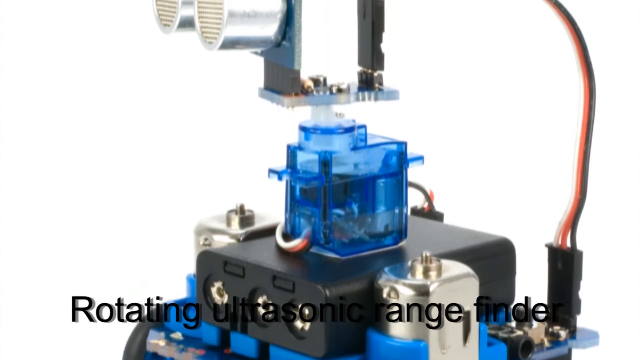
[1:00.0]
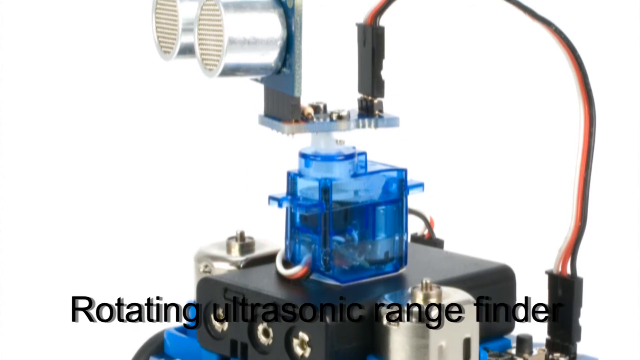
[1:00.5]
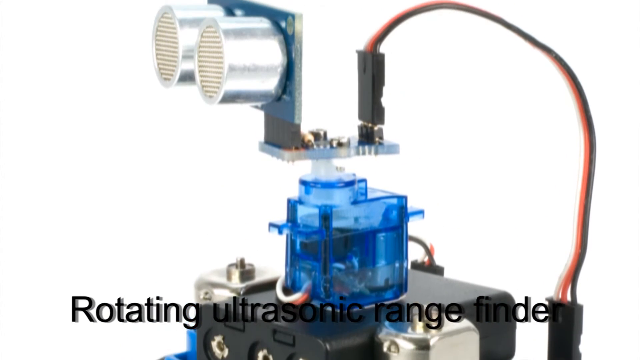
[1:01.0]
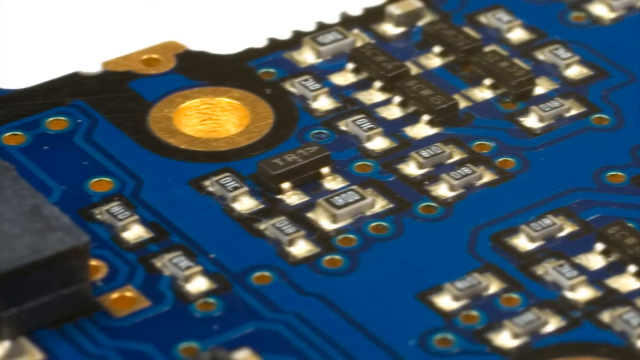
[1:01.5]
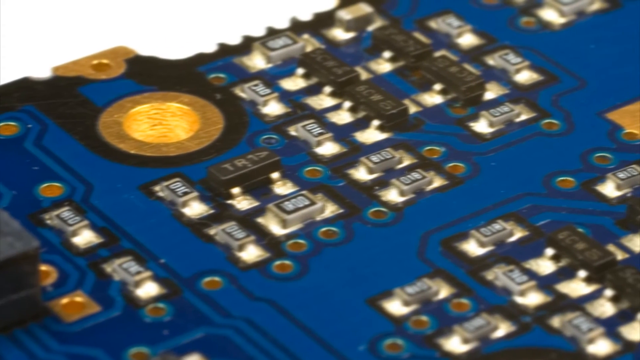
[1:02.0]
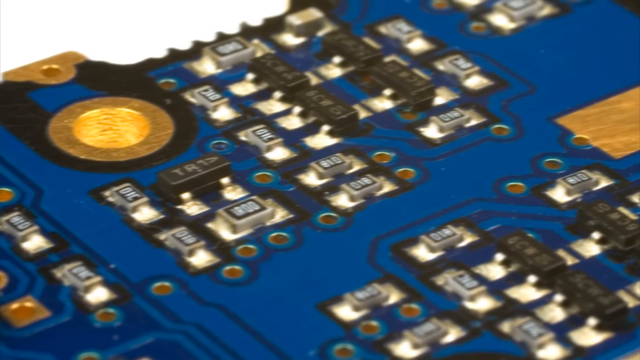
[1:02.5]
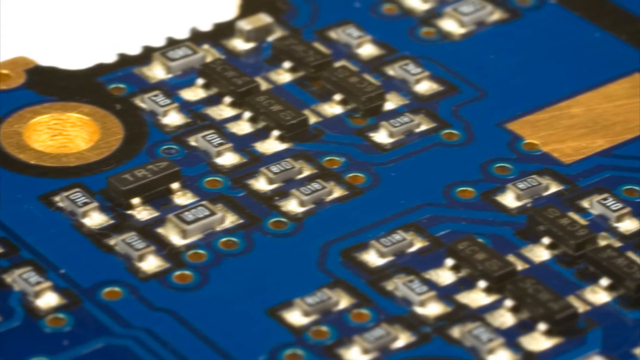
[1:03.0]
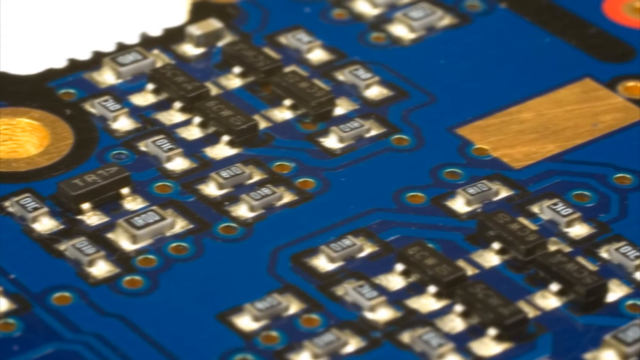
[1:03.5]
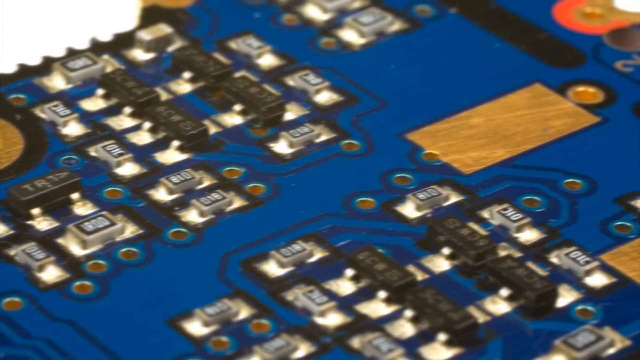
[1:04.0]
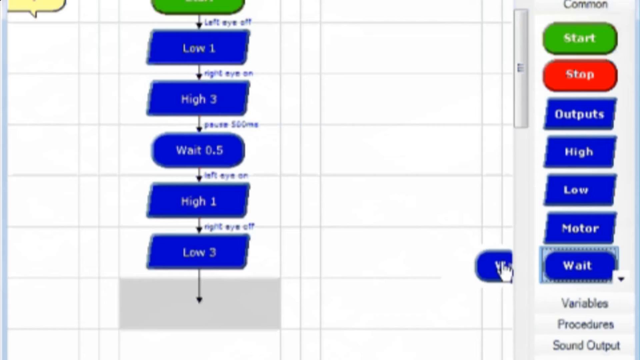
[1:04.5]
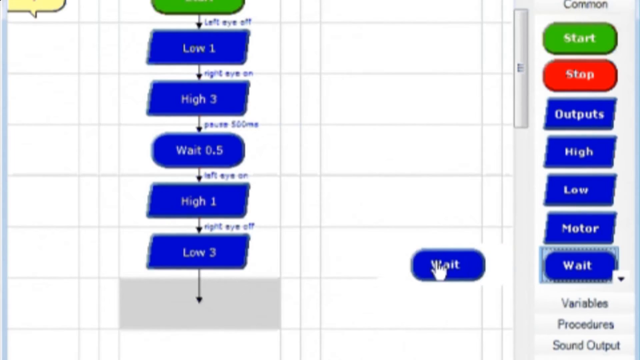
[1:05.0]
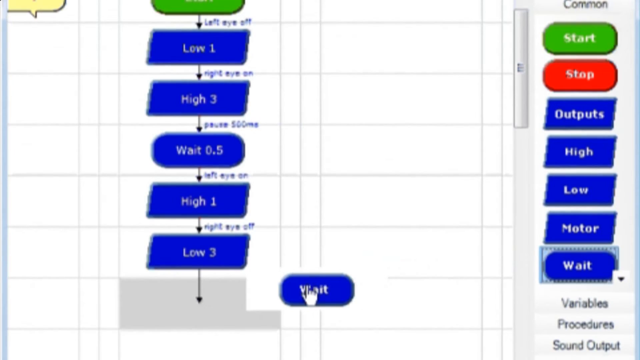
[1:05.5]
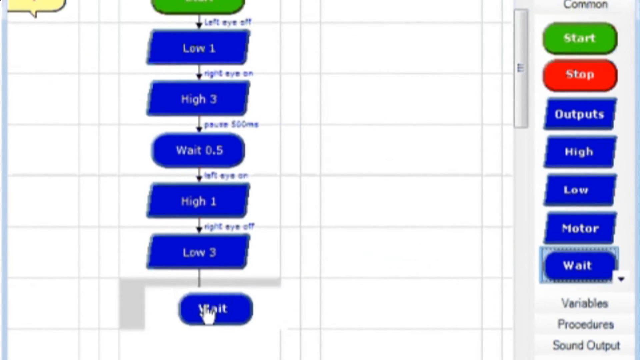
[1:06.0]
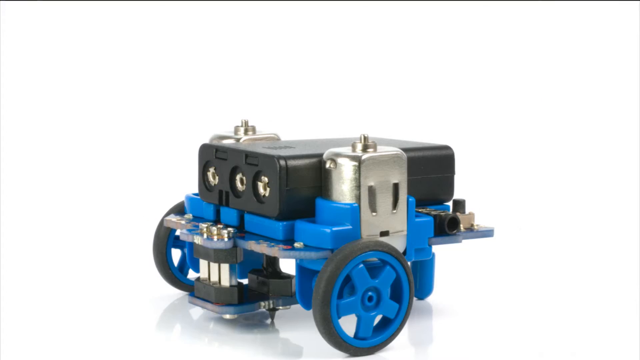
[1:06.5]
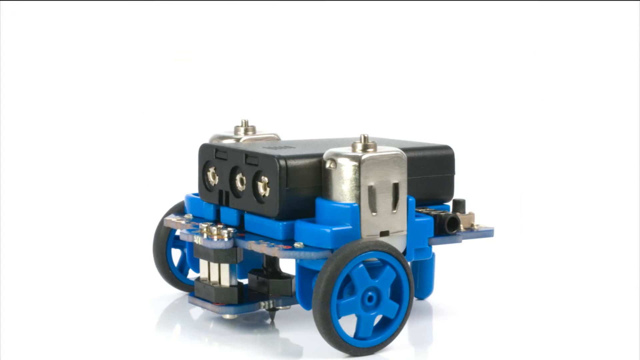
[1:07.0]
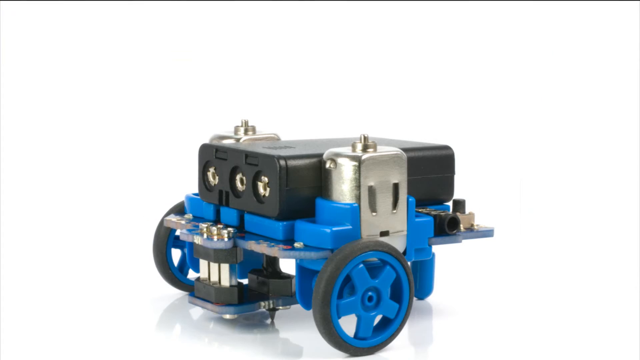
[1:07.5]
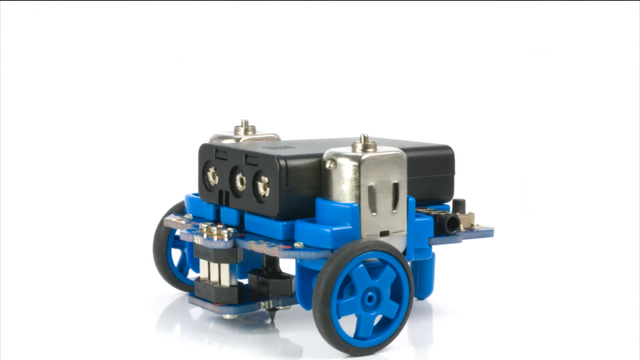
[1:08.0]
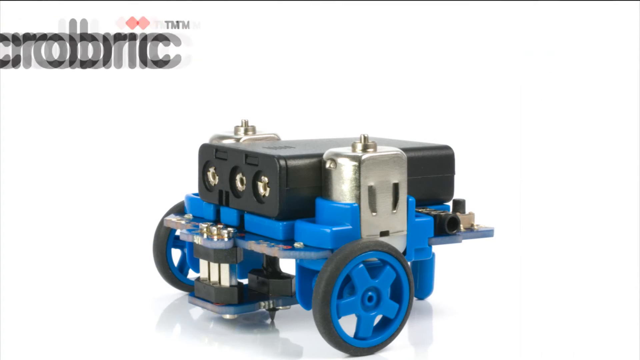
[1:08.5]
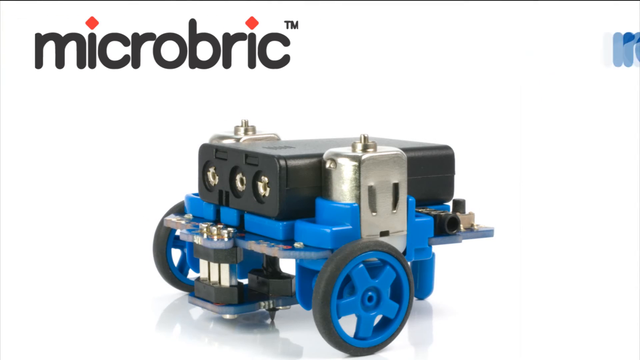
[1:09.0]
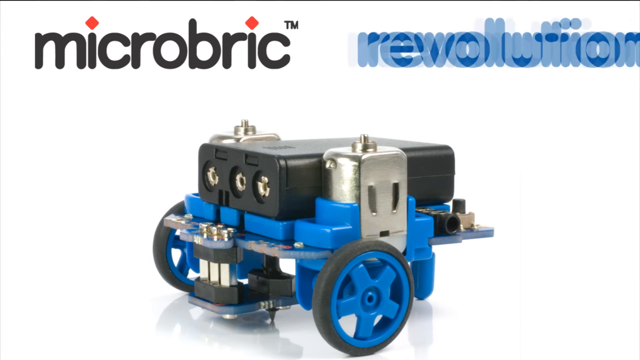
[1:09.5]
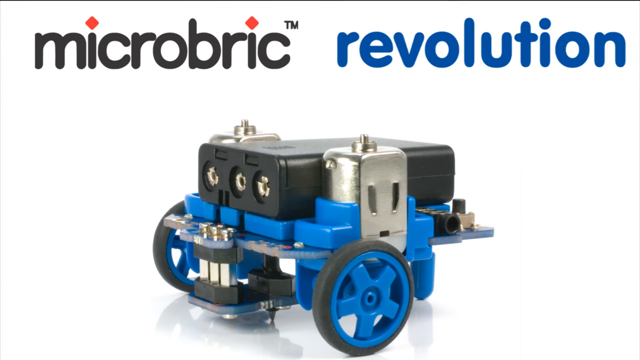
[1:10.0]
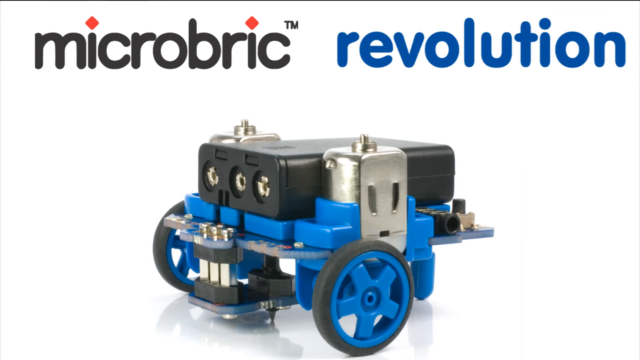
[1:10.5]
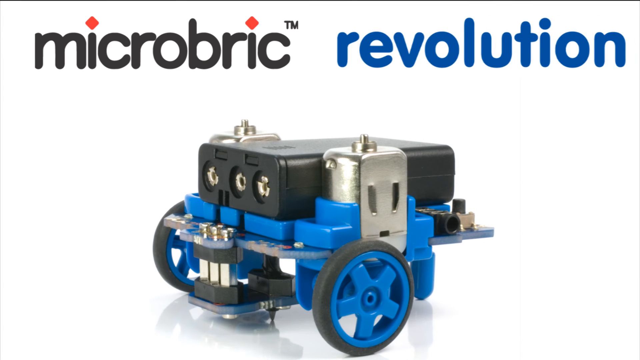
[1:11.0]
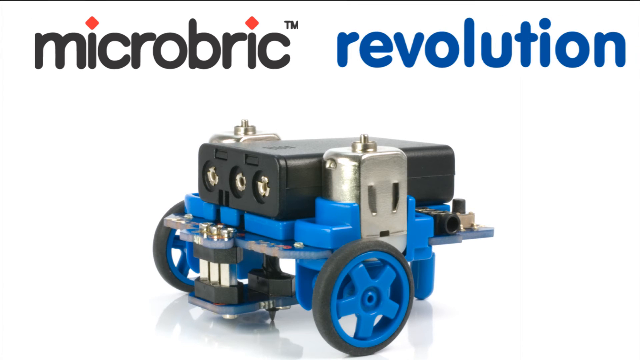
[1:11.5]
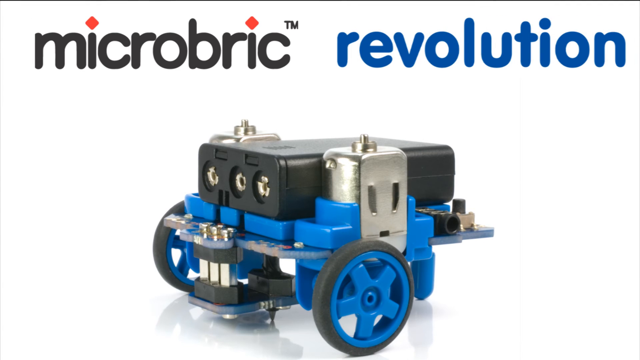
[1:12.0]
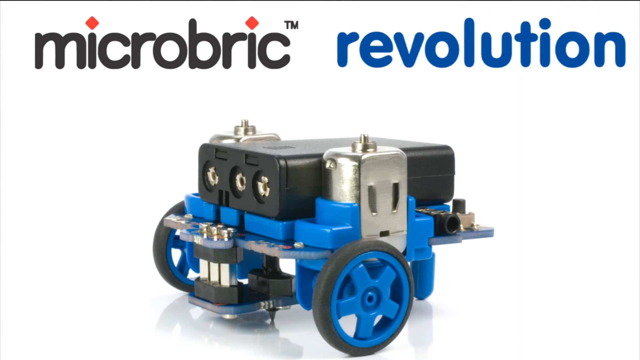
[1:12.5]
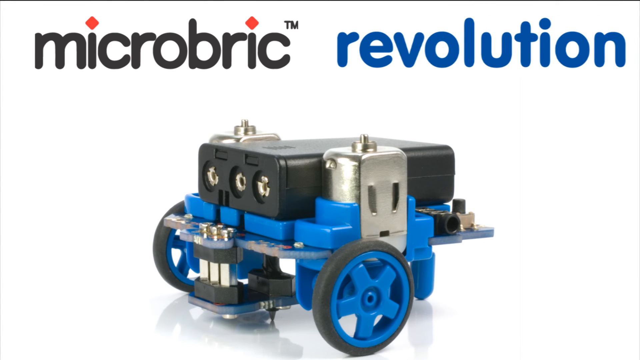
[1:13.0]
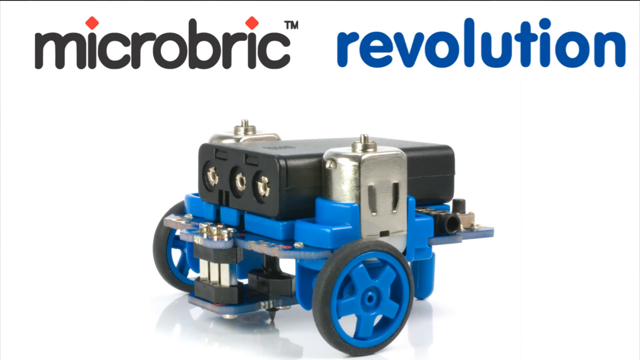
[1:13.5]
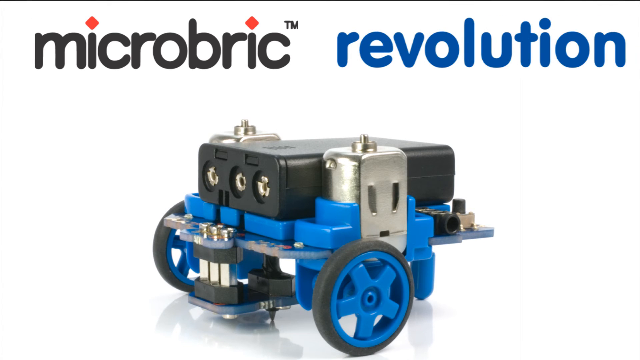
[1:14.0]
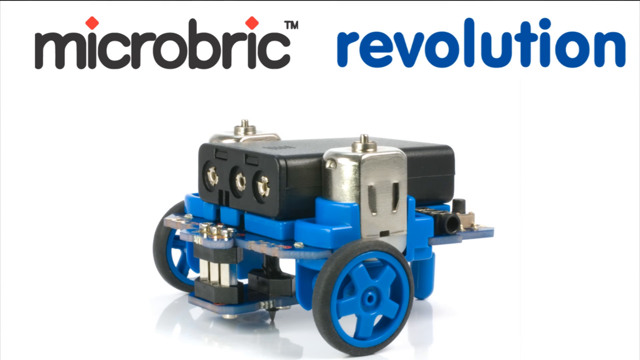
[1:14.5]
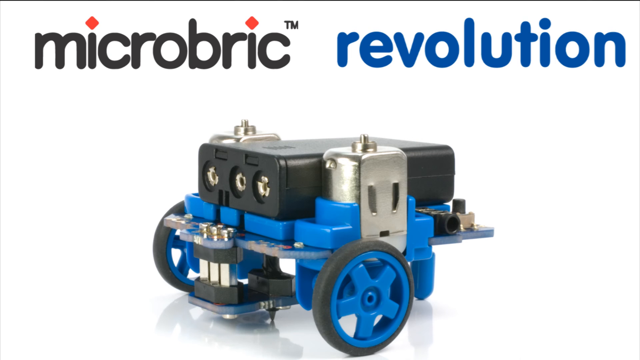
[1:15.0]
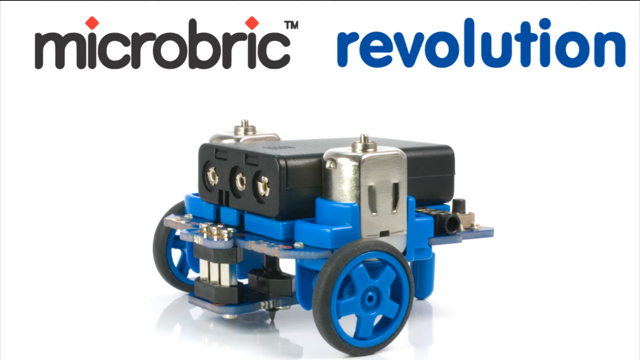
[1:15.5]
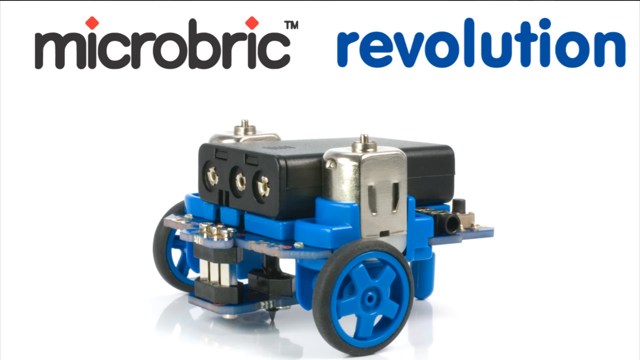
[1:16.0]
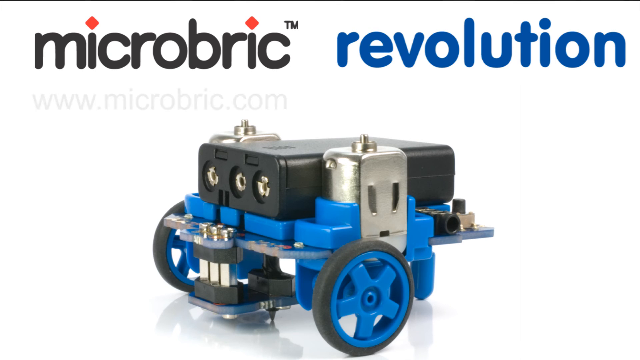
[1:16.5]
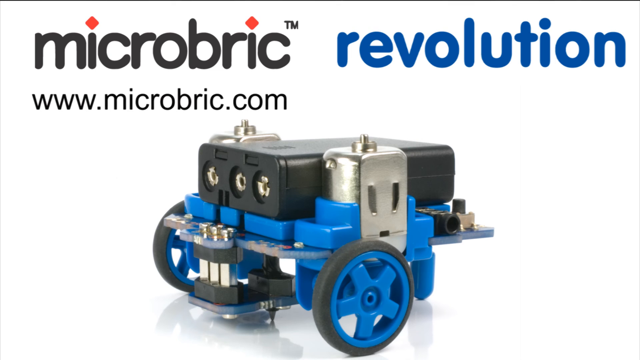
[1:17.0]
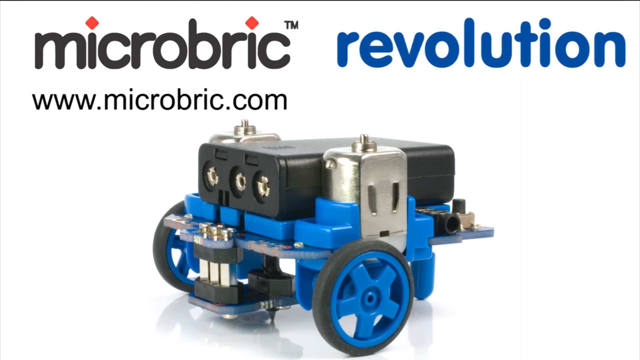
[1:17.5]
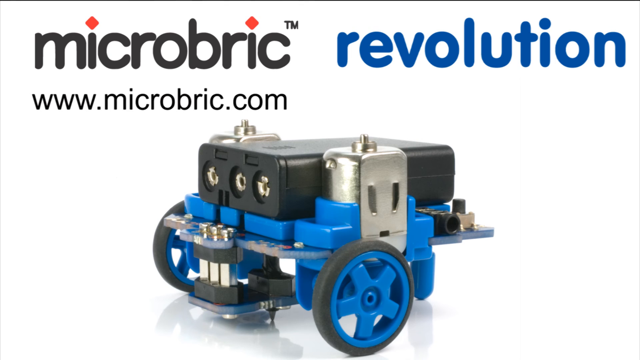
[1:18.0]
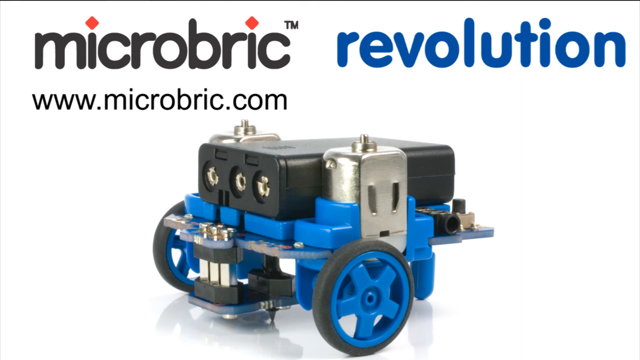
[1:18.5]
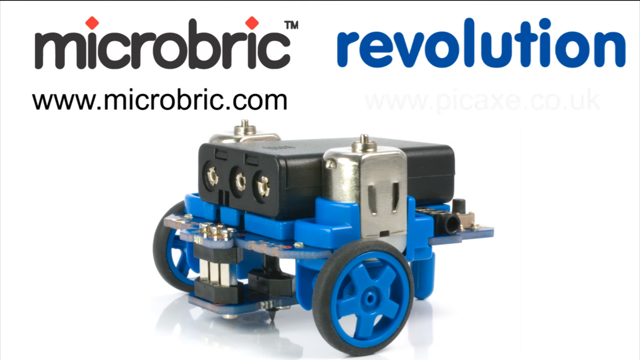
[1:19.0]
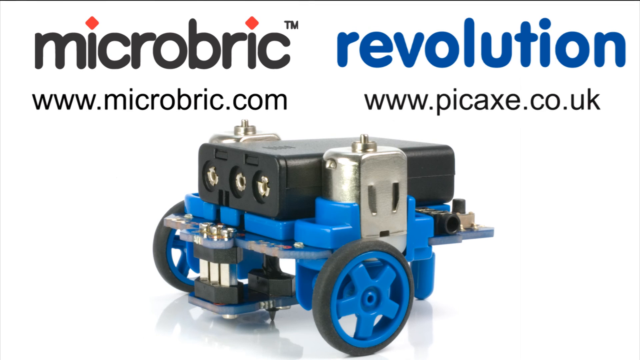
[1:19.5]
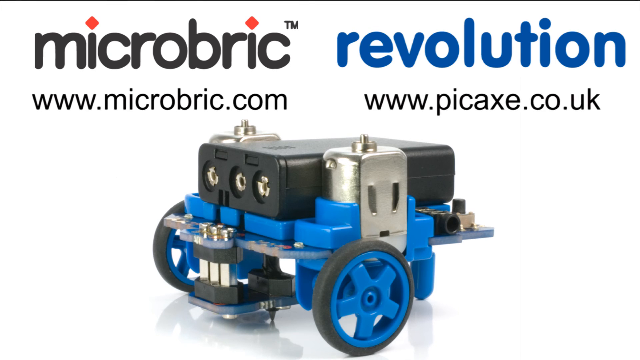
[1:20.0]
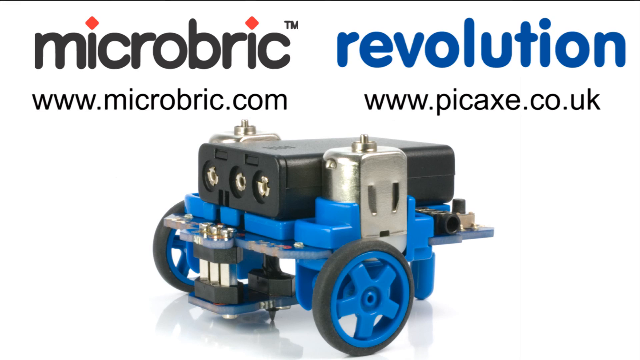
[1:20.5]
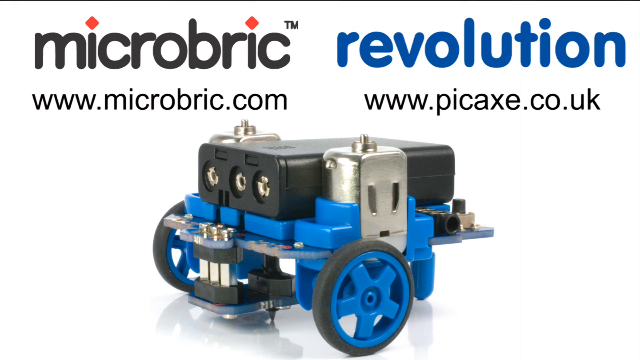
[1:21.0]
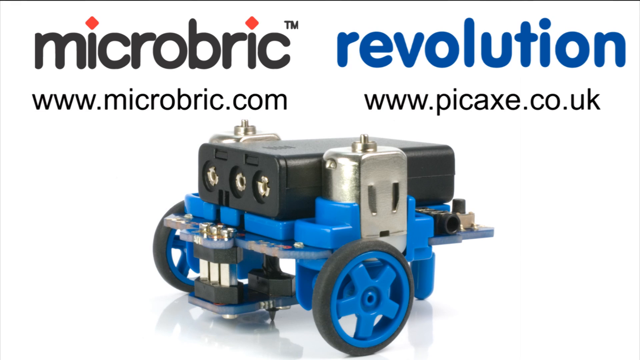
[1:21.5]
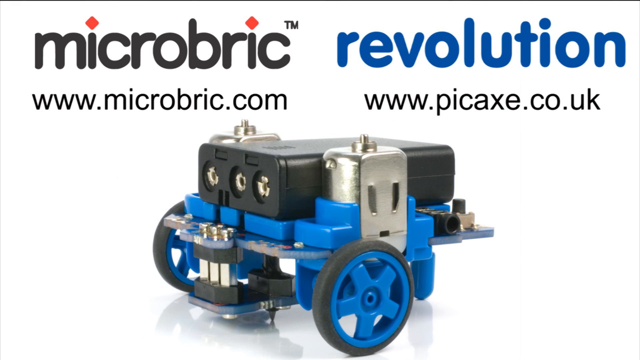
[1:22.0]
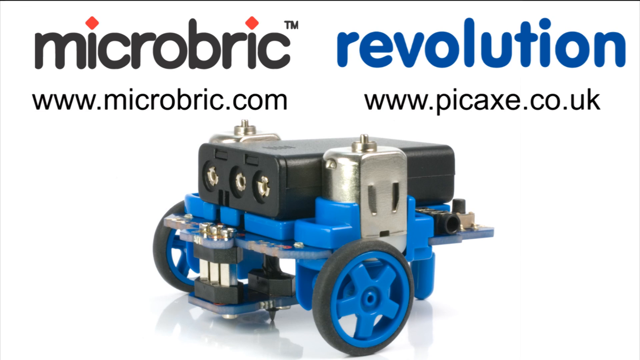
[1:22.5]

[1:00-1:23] The camera pans closely over the motherboard, and the programmer finishes the flowchart by adding more processes, such as a wait process. Then the robot is shown stationary against a white background, revealing its compact blue and silver body, with two blue wheels on its sides connected to small electric motors secured with silver brackets. At the top, a black battery pack sits firmly between the mounts. Above and behind the robot, large printed text reads "Mycobac" and "Revolution" with their corresponding websites, "www.mycovic.com" and "www.pickaxe.co.uk". "Revolution" is on the top right and "Mycobac" on the top left in red, black and red text: the dots on the eyes are red while the rest of the text is black. The whole "Revolution" text is blue. The aux is still visible, and the power button is visible alongside it.